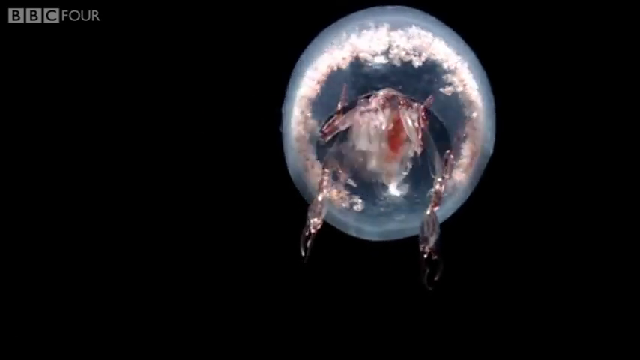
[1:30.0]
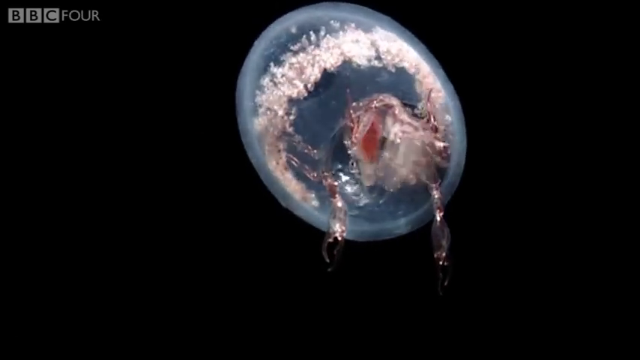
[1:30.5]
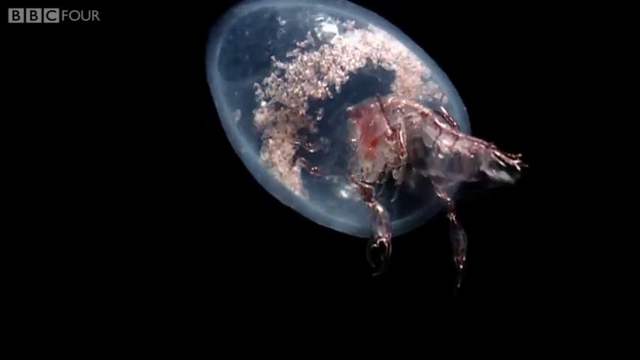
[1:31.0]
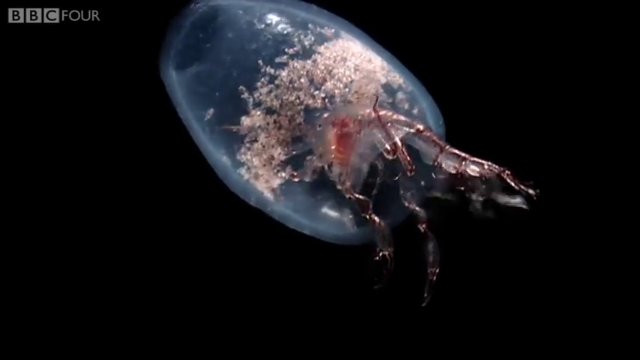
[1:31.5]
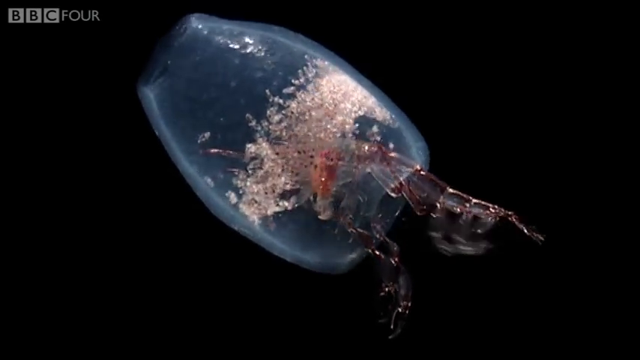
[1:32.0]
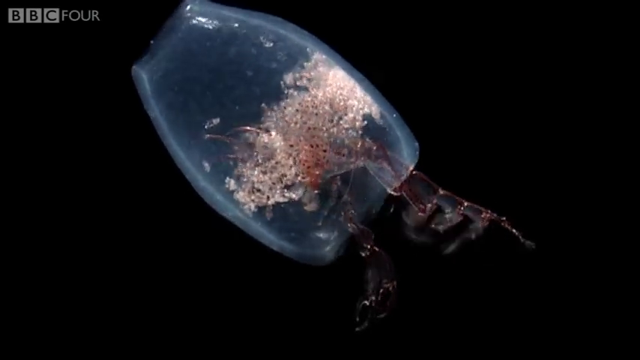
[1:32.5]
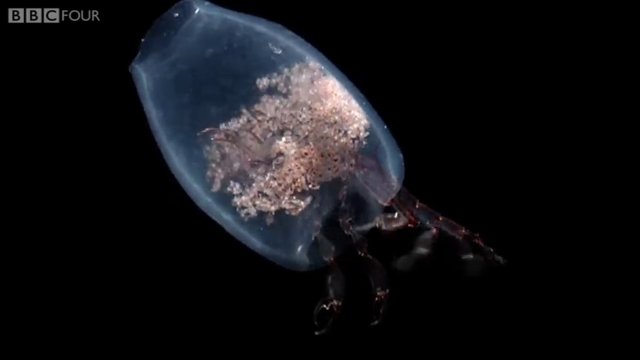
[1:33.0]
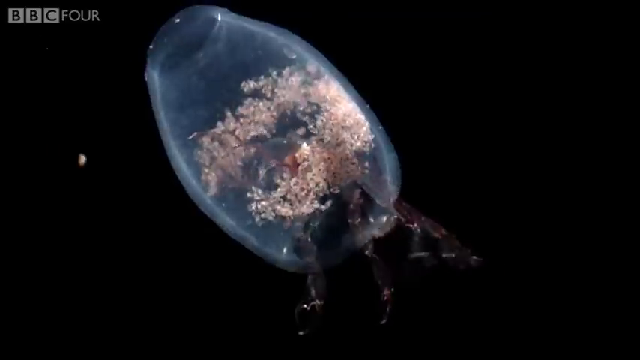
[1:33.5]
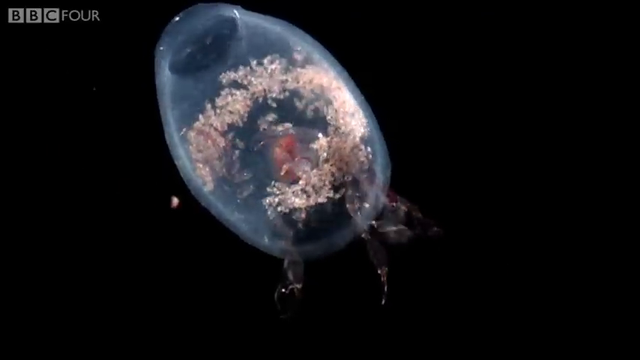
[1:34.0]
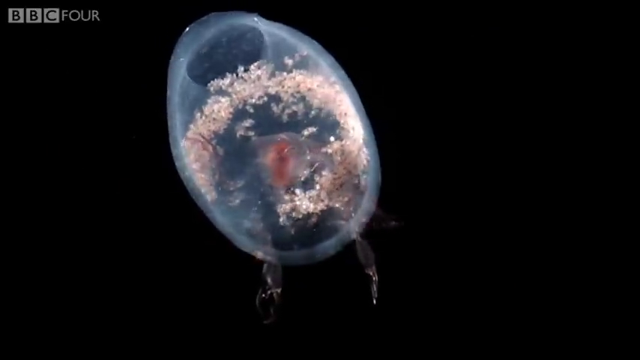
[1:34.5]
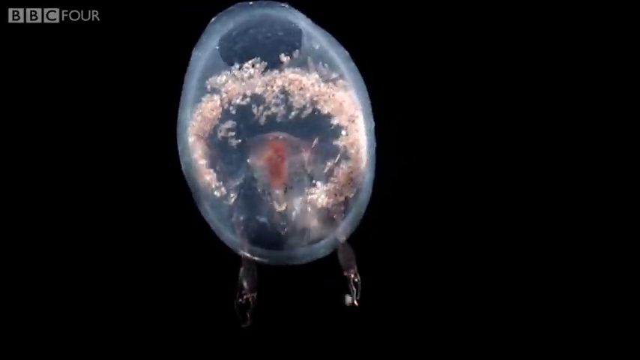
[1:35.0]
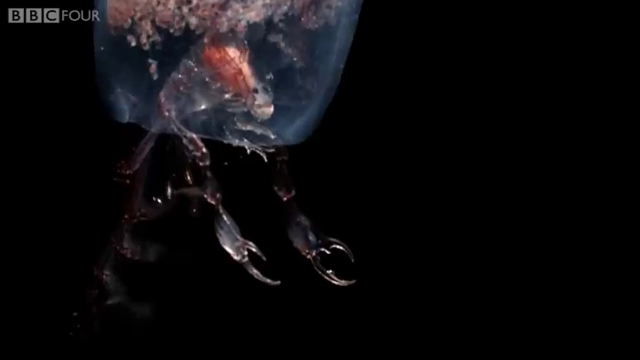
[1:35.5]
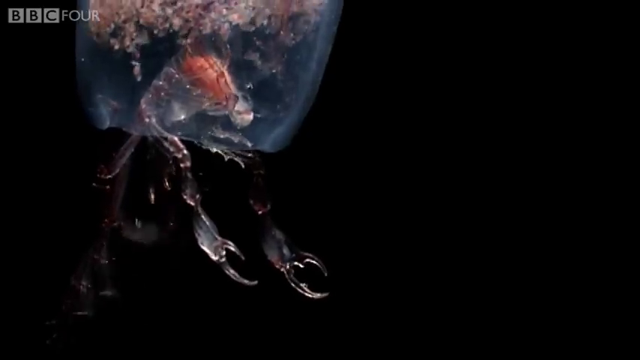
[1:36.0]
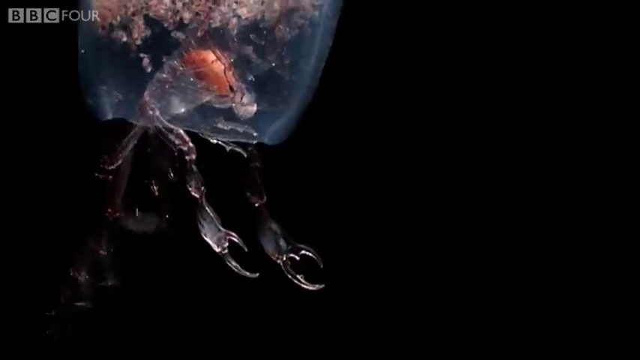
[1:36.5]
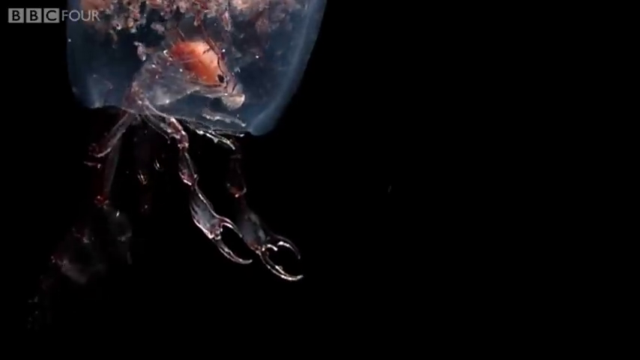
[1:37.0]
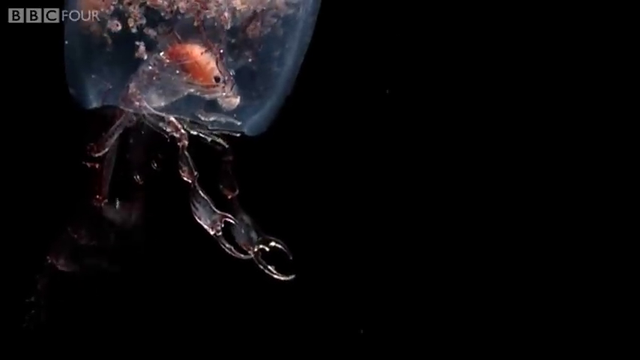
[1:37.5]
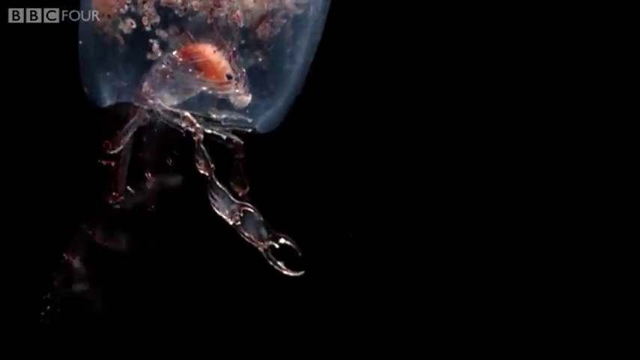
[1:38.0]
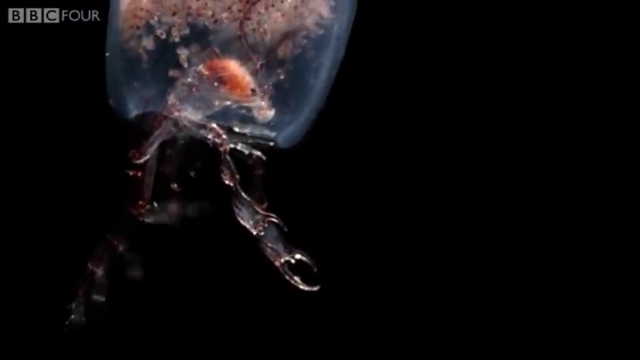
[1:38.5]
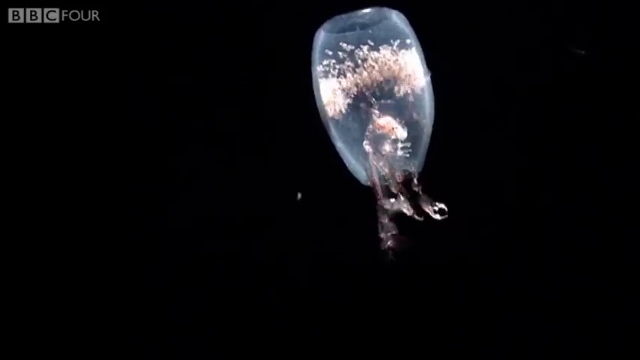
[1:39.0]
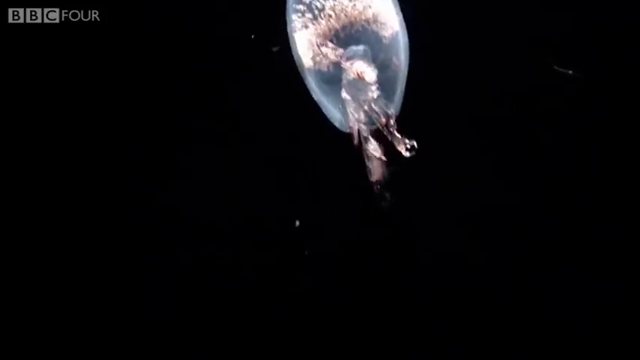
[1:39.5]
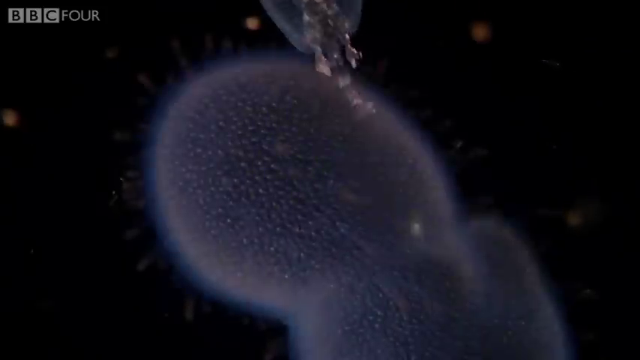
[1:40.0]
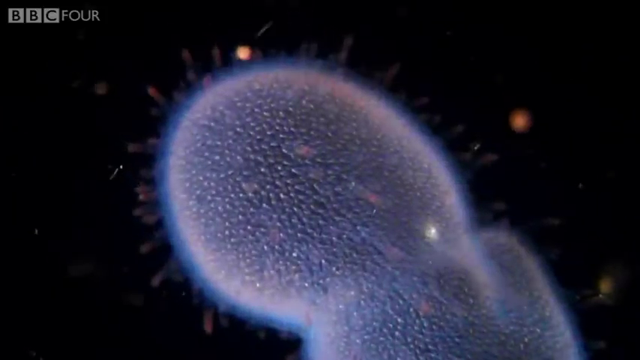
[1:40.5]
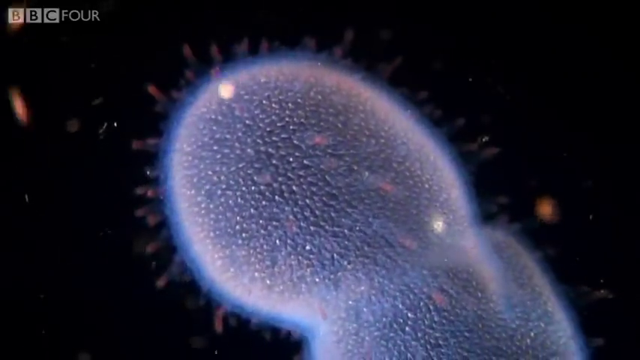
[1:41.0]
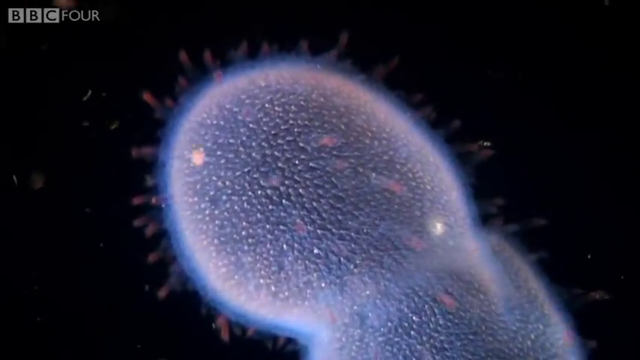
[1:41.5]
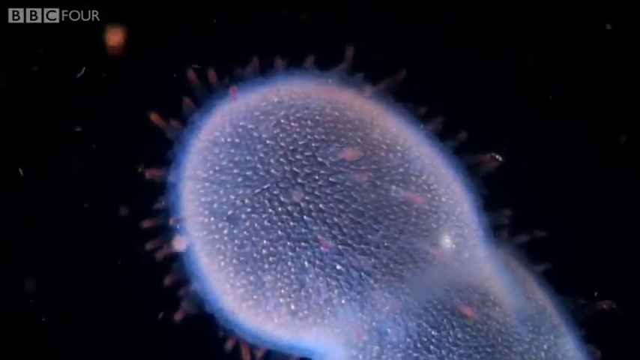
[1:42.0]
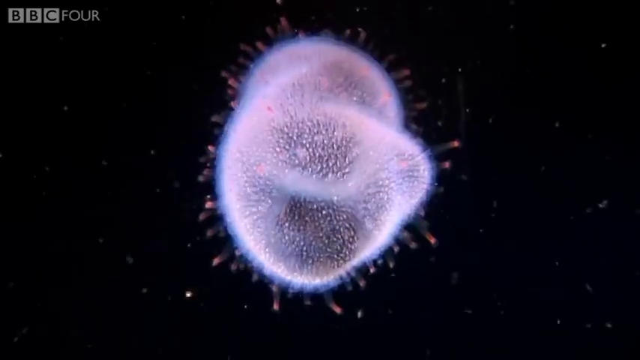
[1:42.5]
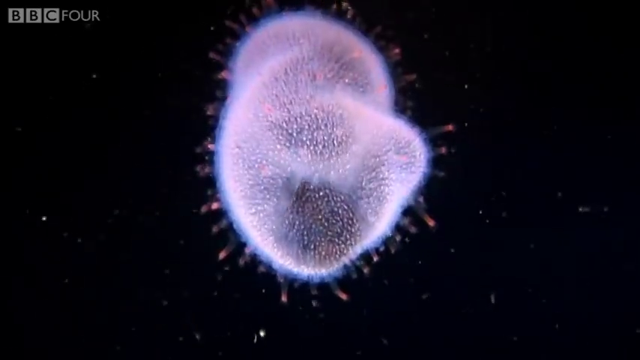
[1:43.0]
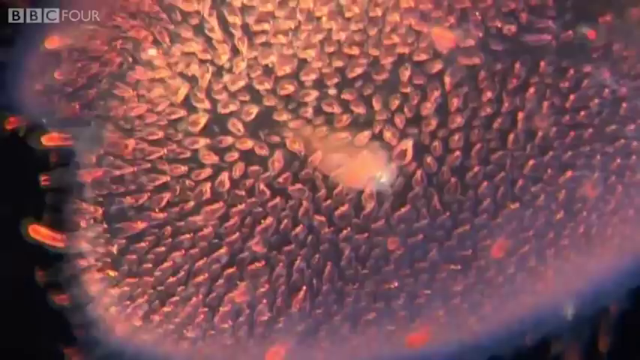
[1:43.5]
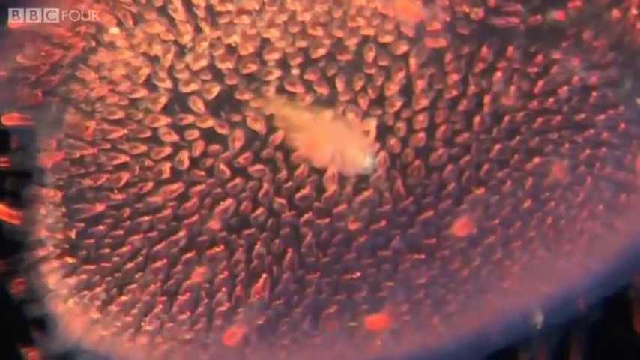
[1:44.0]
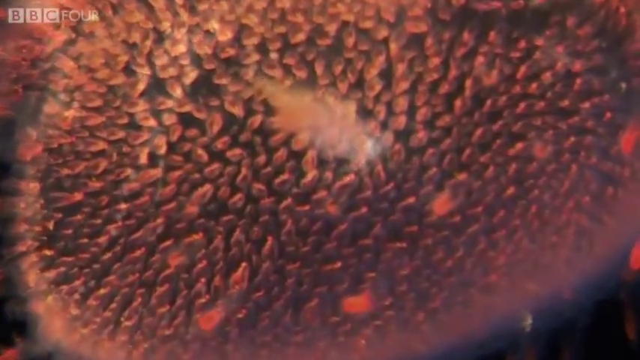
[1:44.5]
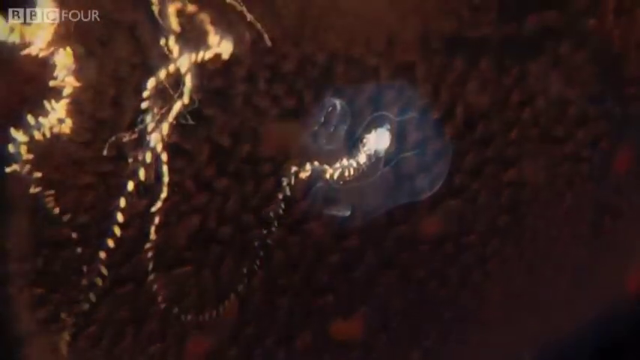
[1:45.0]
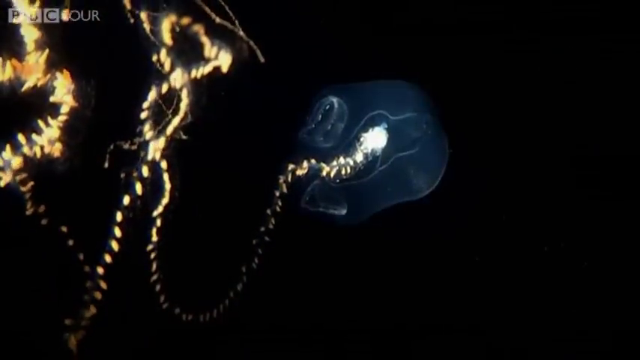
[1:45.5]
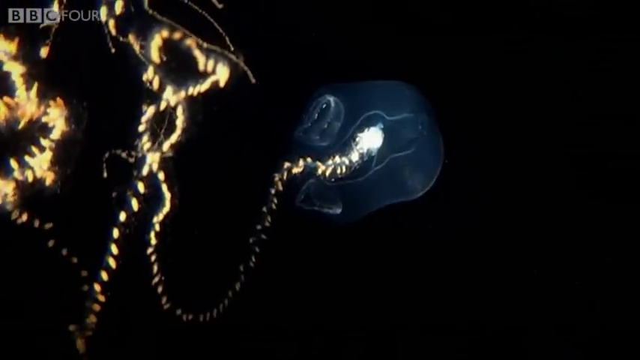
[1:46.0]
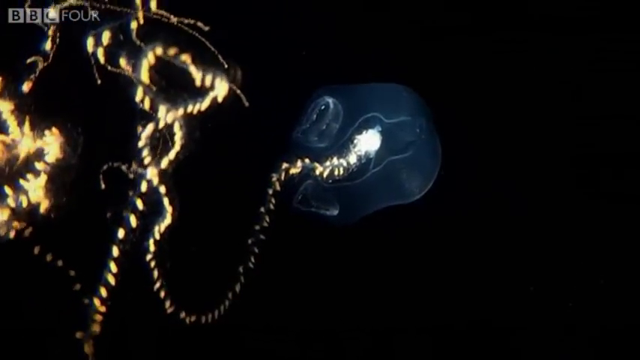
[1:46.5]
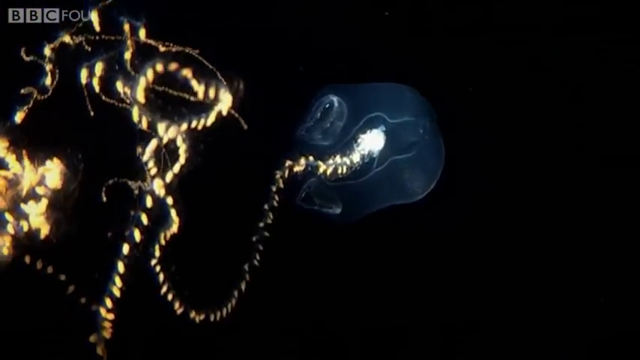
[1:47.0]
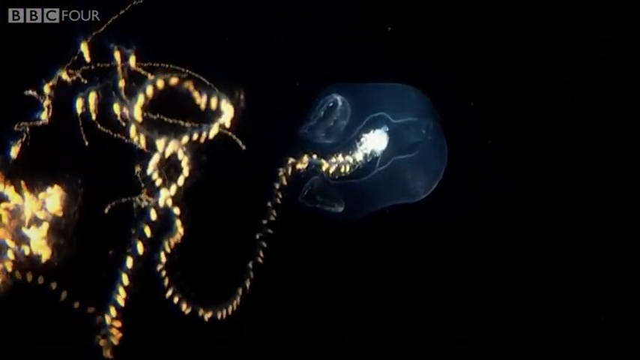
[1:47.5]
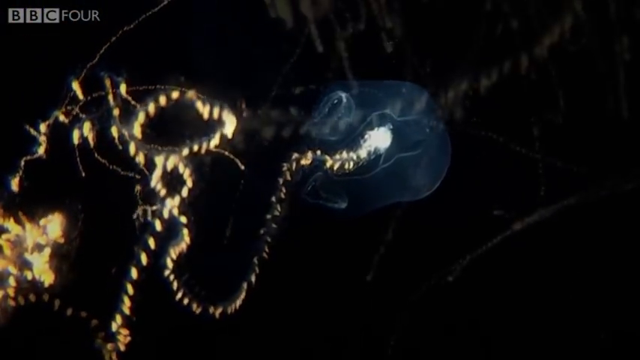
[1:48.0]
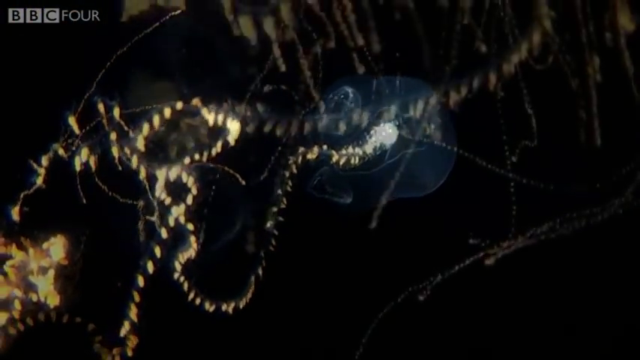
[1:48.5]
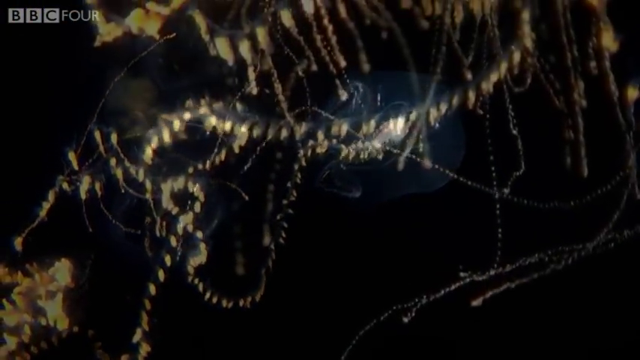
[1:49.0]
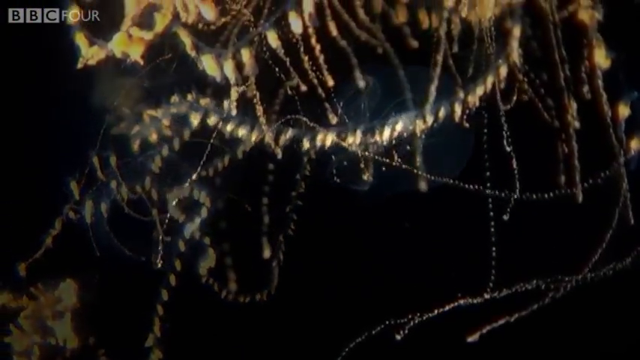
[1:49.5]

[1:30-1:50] A deep-sea creature has a body that looks like a wasp. At the front of its body is what looks like a large see-through cocoon, and inside it there appear to be dozens, maybe even hundreds, of eggs. The creature uses its rear legs to propel itself through the water. Other deep-sea creatures are shown; some look larger than others, but all are see-through or translucent, and they possibly glow with bioluminescence. One of them is pinkish, with little tentacles coming out from all sides of its body, which is a kind of round, tubular shape.